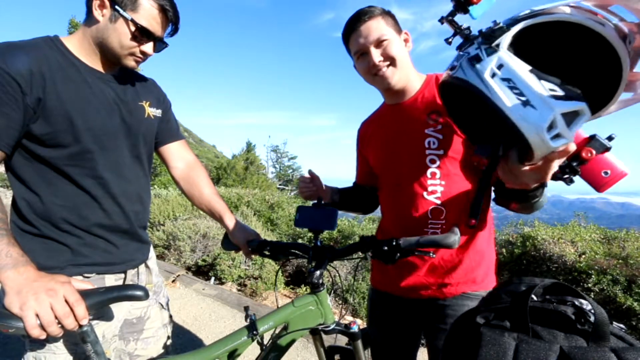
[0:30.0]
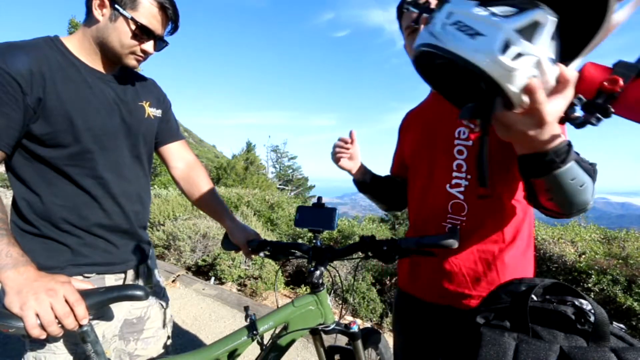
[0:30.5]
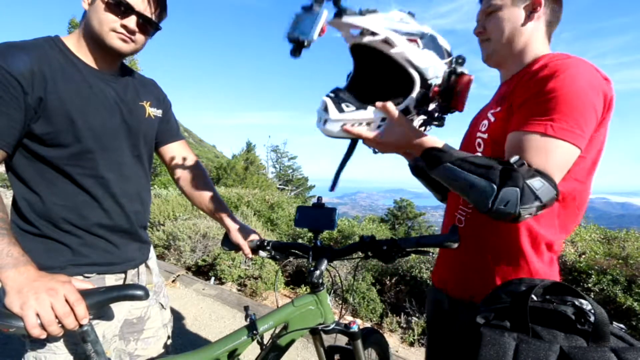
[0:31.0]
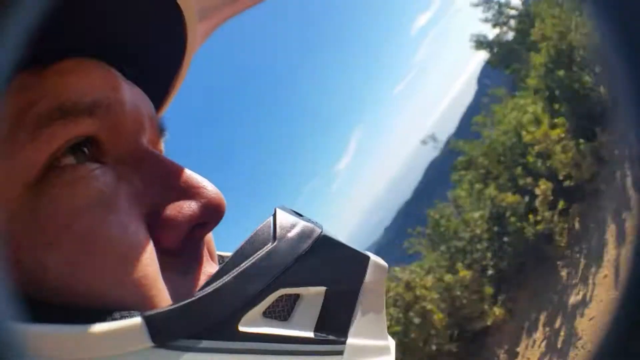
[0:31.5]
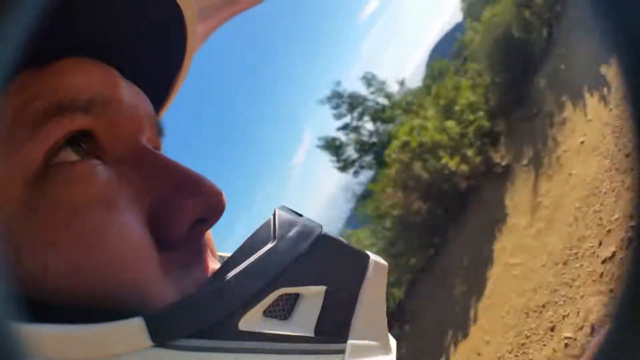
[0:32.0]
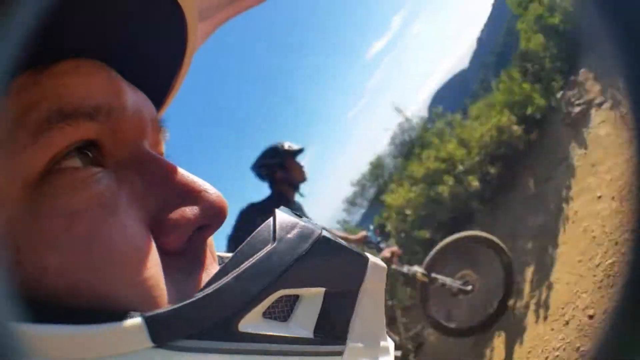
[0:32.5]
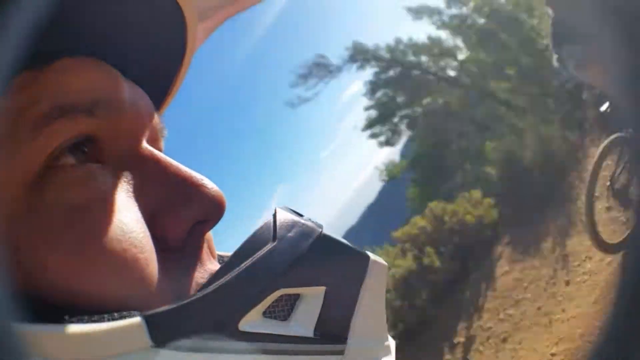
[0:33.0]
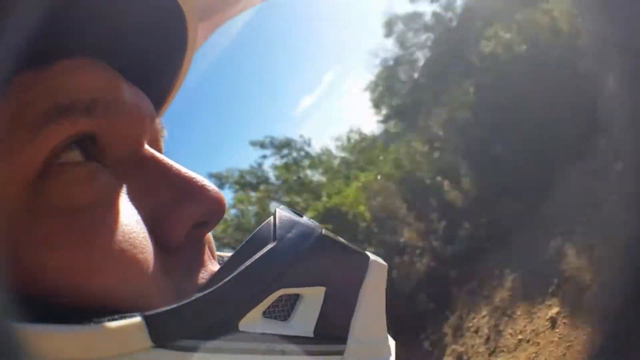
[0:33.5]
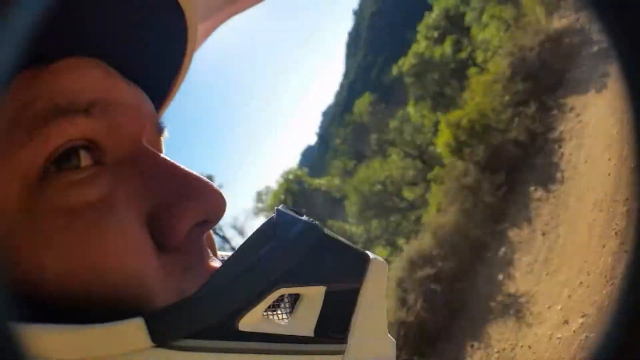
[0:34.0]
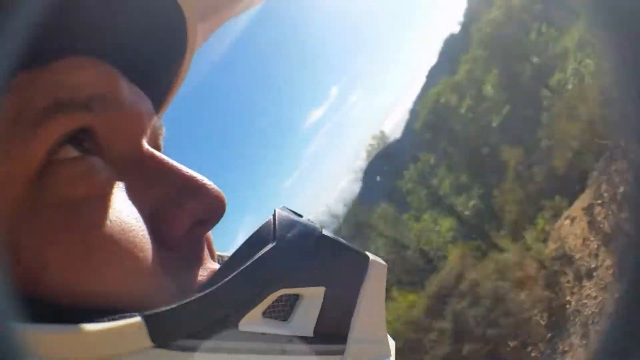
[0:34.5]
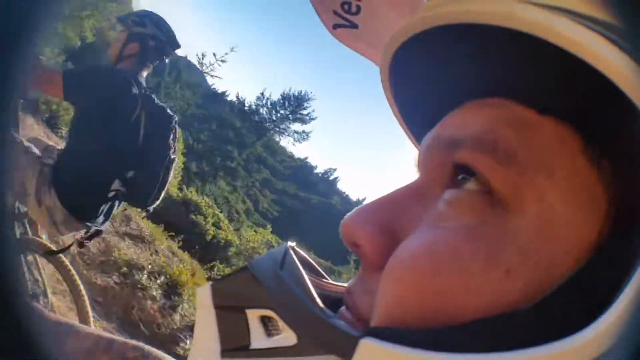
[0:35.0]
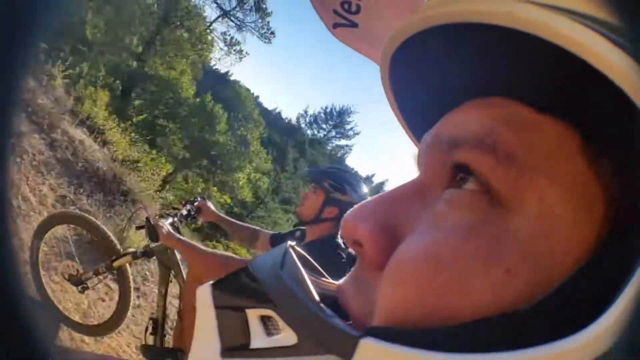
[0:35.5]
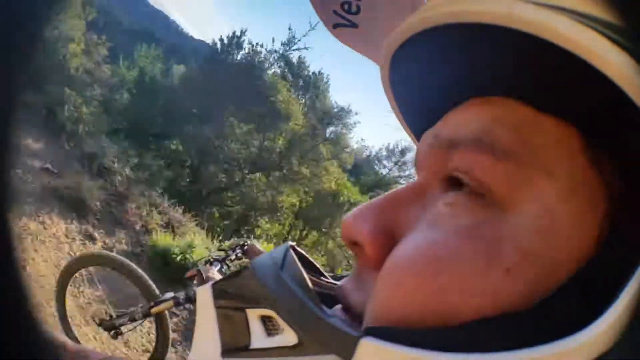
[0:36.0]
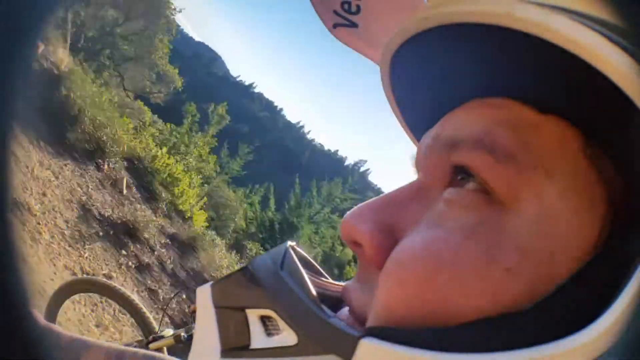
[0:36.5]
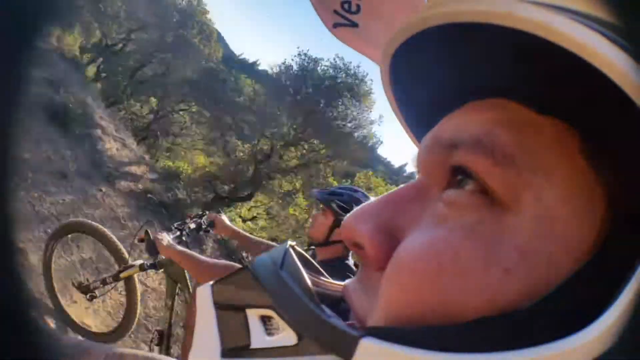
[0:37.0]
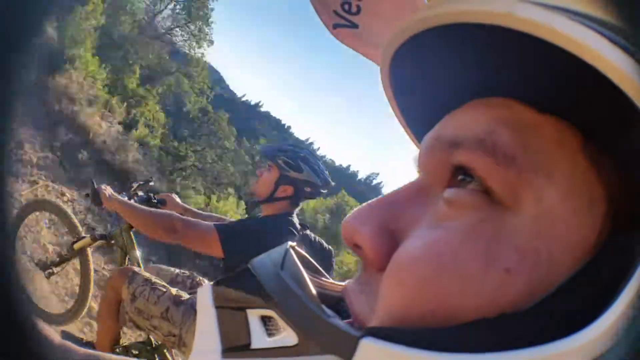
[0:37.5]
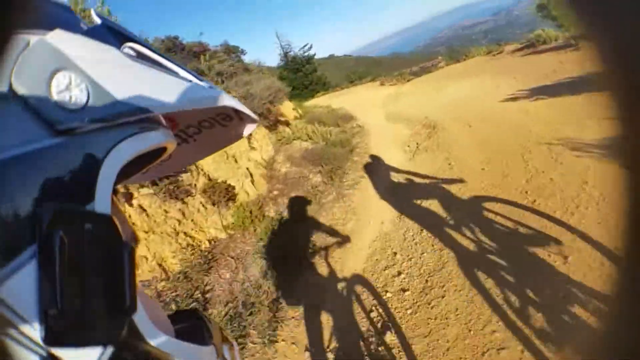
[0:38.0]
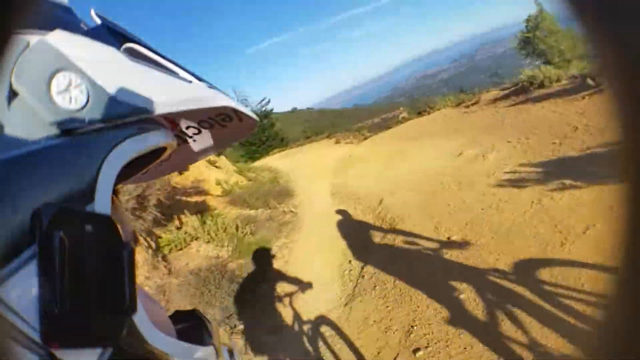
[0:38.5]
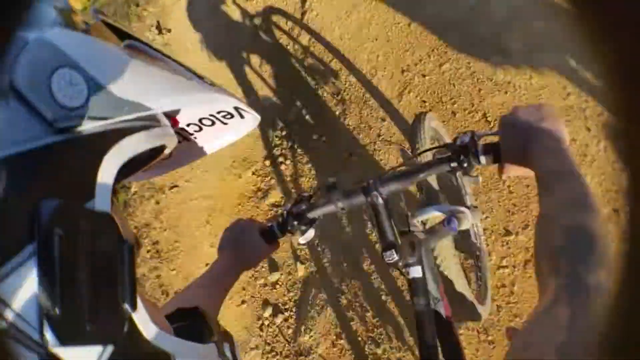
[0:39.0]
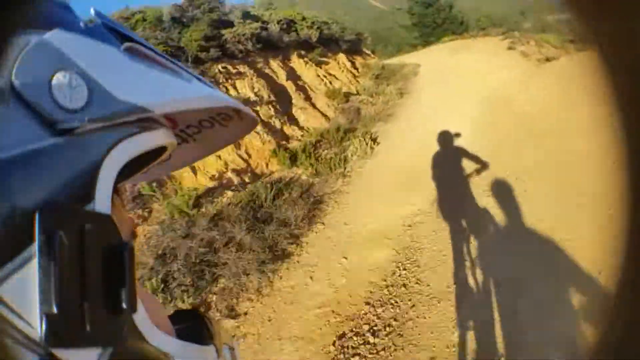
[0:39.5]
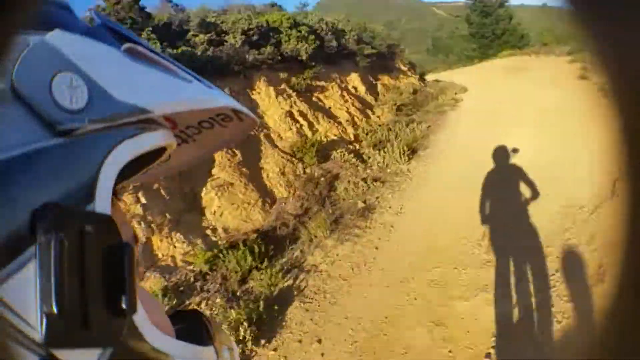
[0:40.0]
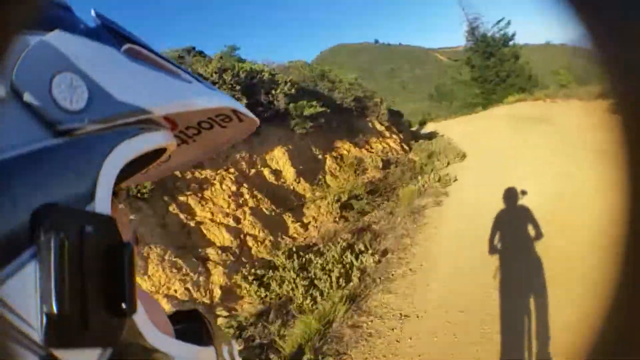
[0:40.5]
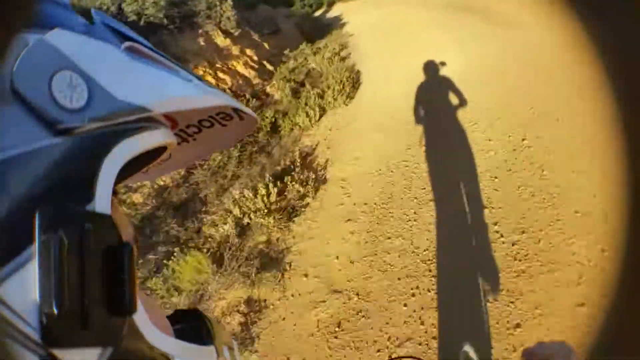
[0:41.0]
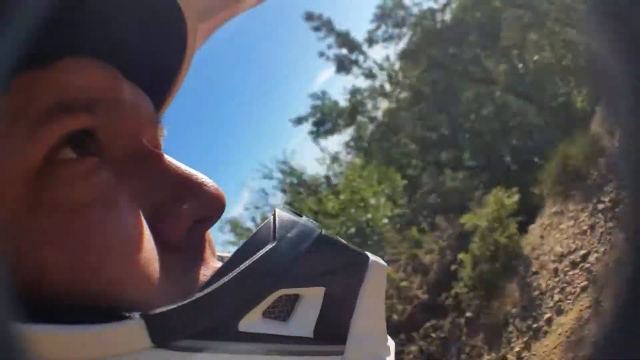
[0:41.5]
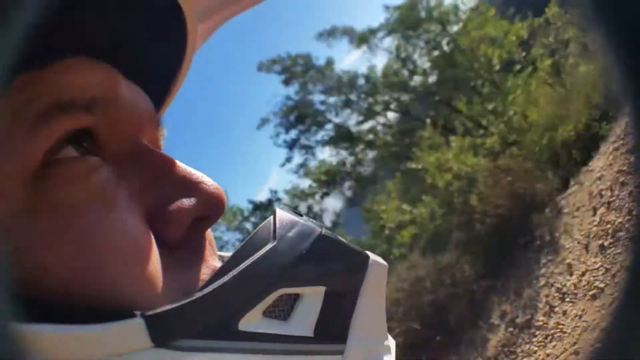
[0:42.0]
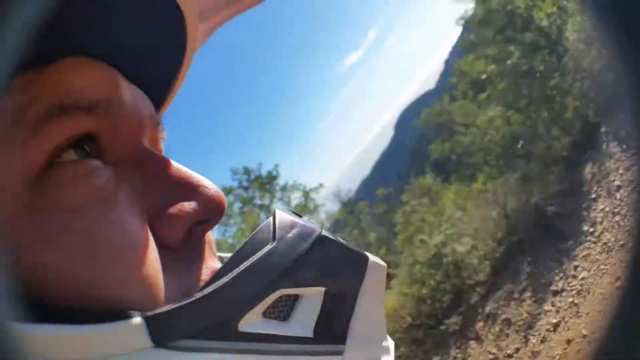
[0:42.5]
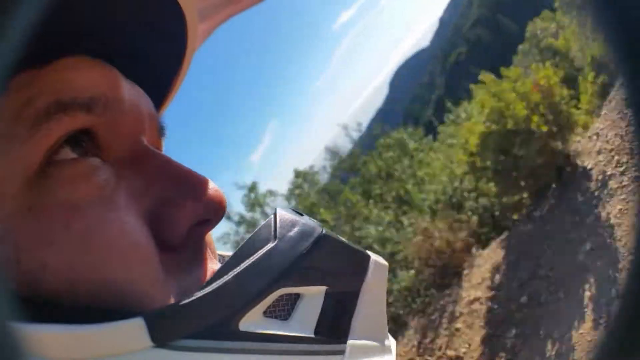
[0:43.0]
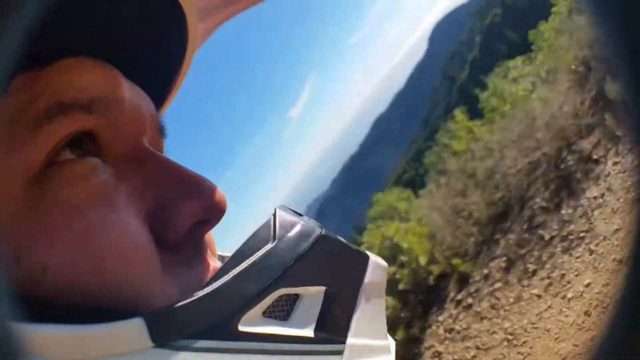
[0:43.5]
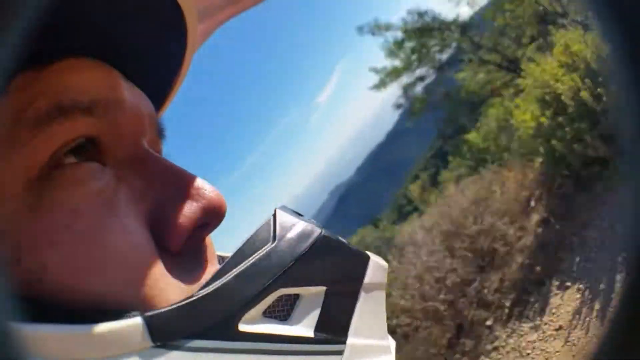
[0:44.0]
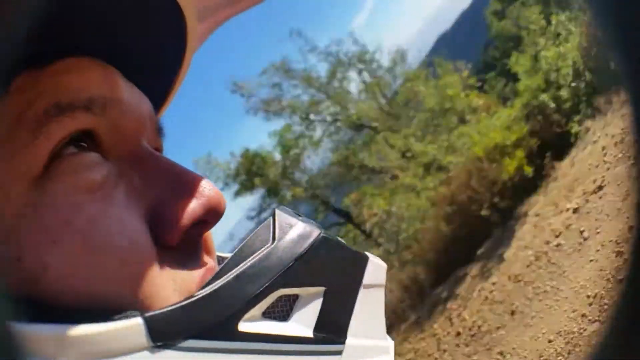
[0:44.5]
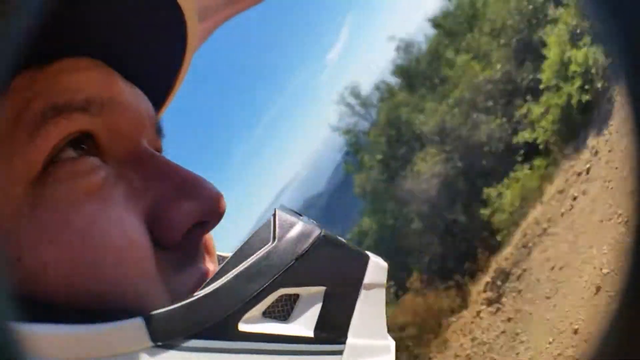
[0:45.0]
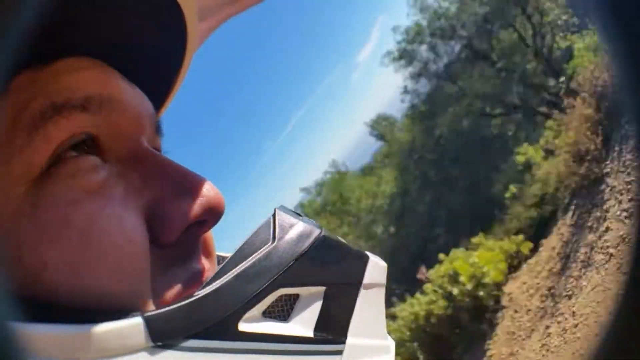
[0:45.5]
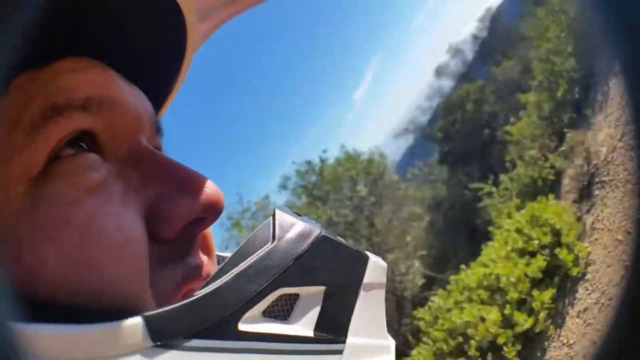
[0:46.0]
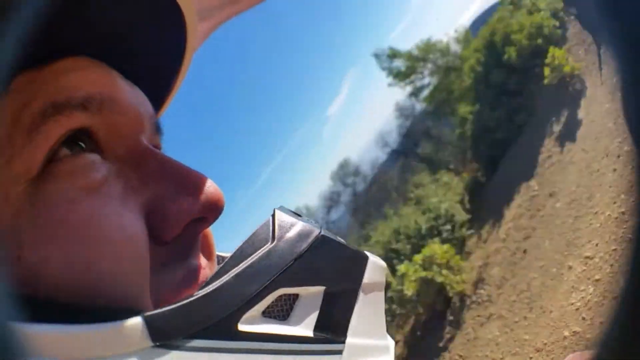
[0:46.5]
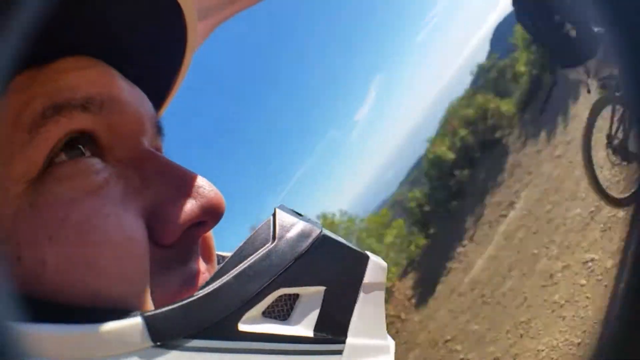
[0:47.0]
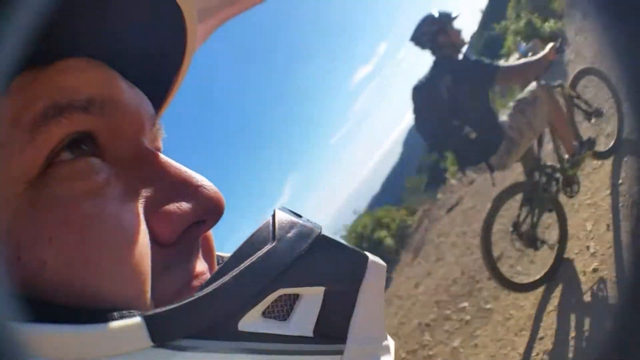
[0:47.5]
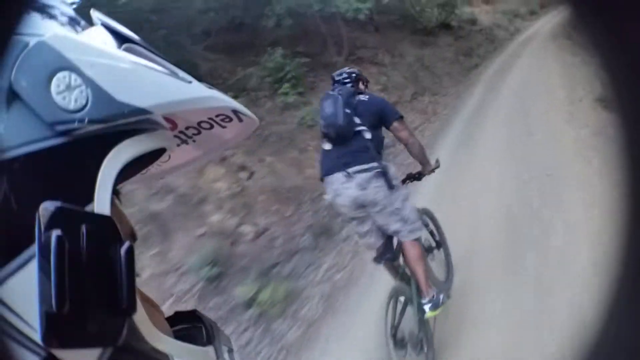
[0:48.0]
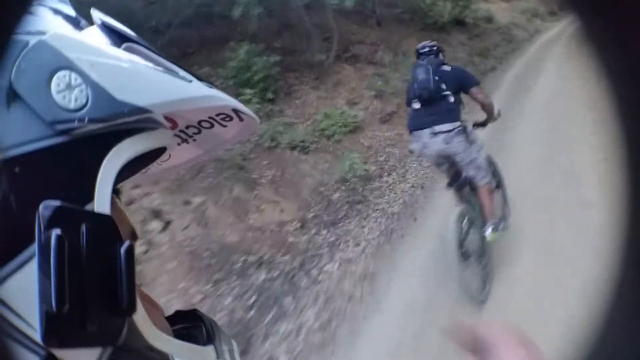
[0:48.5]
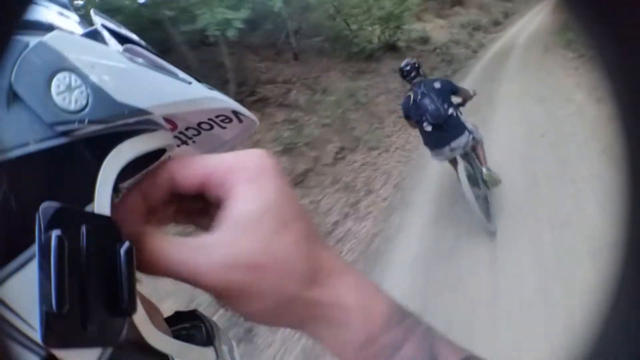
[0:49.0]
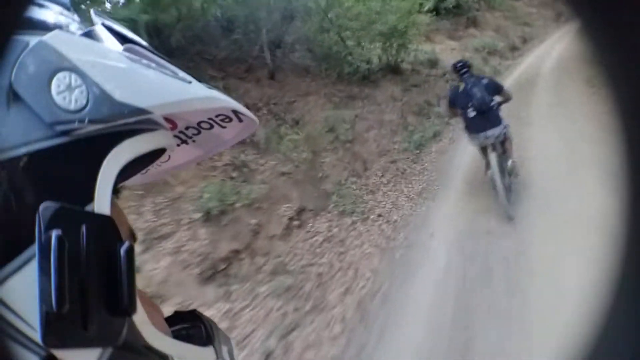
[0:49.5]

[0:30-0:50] Two Caucasian young men, perhaps in their late 20s, both with hair cut quite short, are in a very mountainous area. The man on the left turns slightly toward the east; he wears a dark t-shirt and khaki bottoms. His left hand holds the left side of the front of a bicycle with black handlebars, and his right hand grips the black seat. Neither man's feet nor the bottom of the bike are visible. The man on the right holds a white helmet equipped with what look like cell phones or cameras and gives what looks like a demonstration. The view then shows the right side of a bicyclist's face, evidently filmed by a camera set up on his helmet, as he faces eastward and moves along with a green mountain in the background. Next the other bicyclist appears, also wearing his helmet. The two seem to be racing one another, demonstrating how they can film their bike ride down a dirt road.